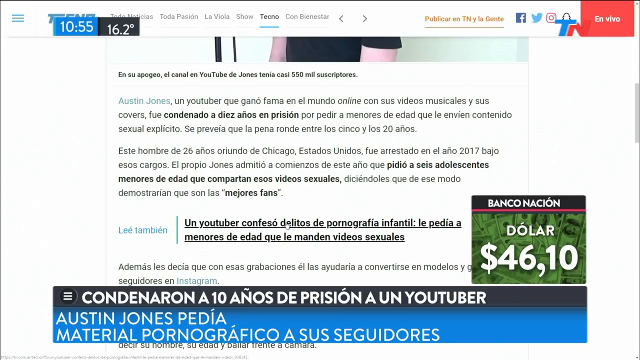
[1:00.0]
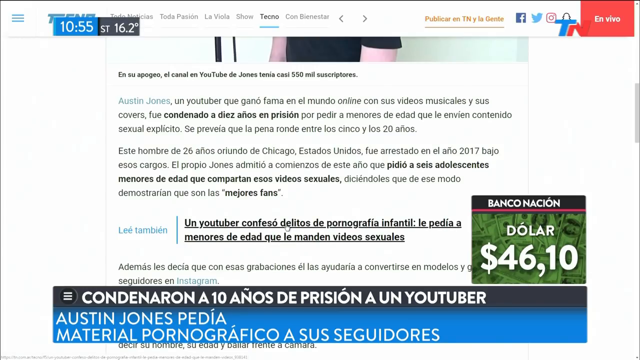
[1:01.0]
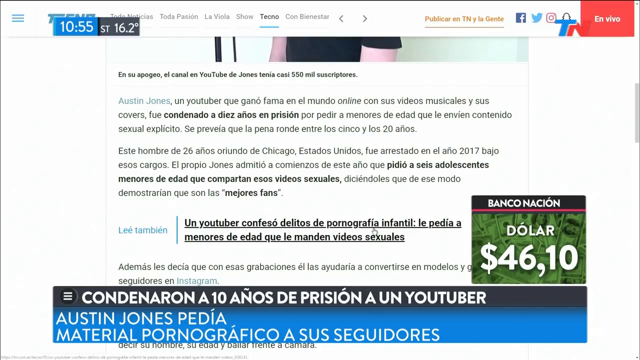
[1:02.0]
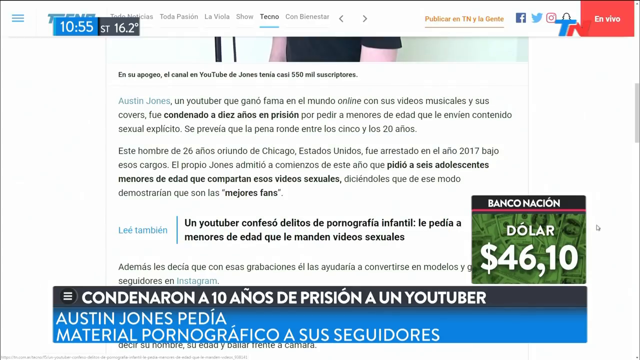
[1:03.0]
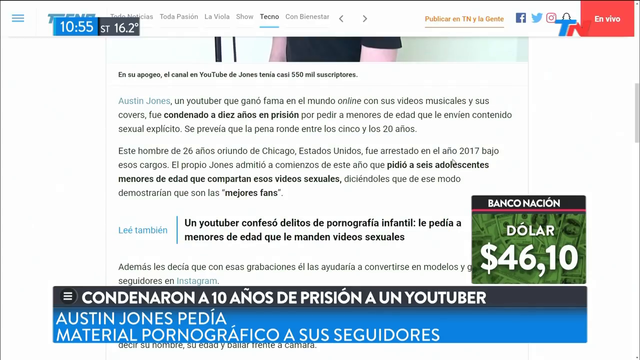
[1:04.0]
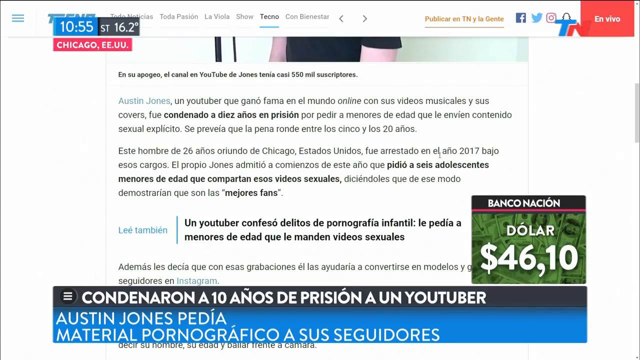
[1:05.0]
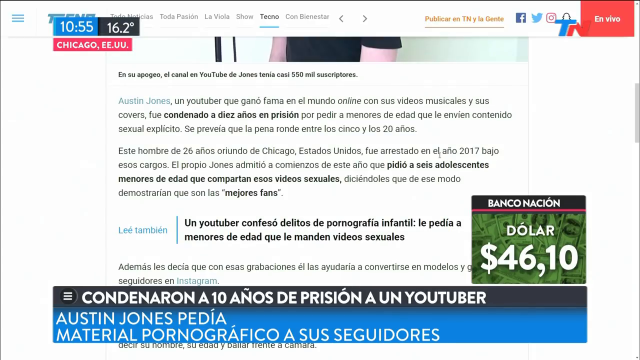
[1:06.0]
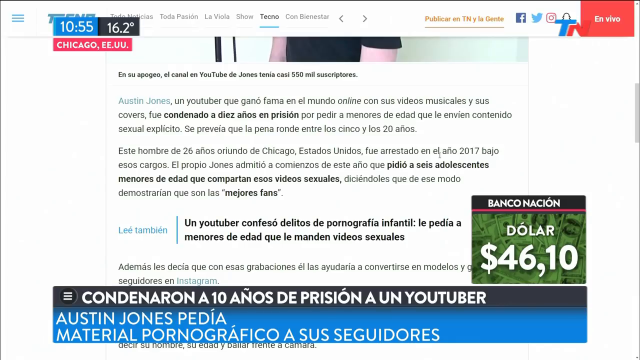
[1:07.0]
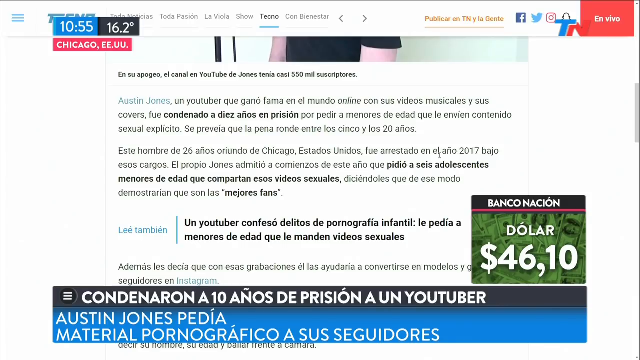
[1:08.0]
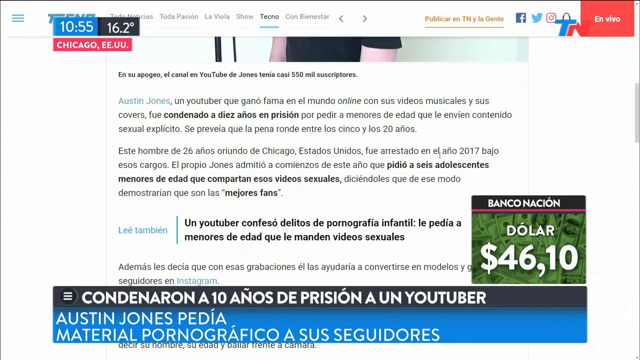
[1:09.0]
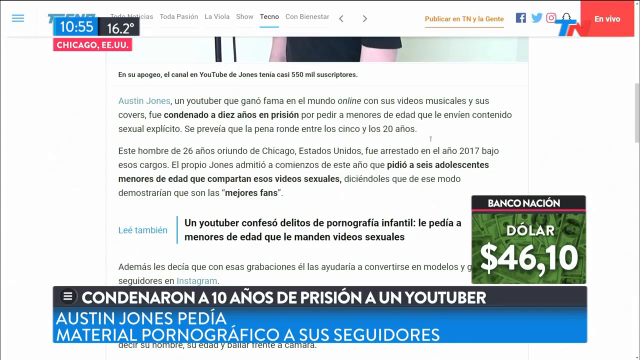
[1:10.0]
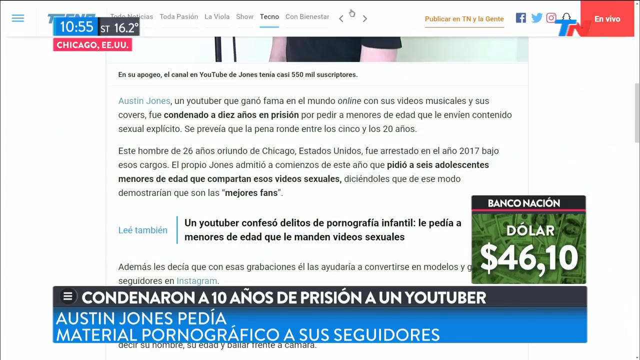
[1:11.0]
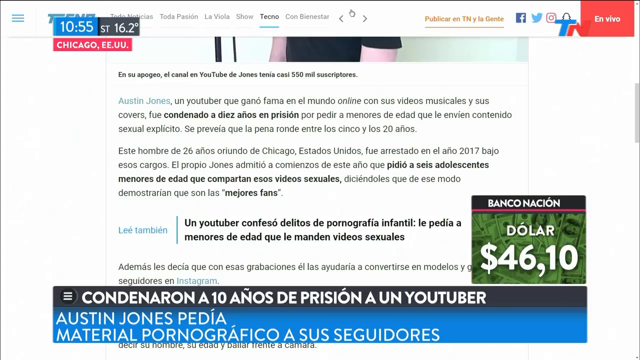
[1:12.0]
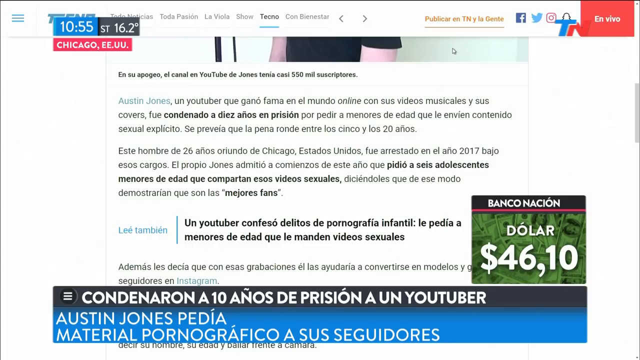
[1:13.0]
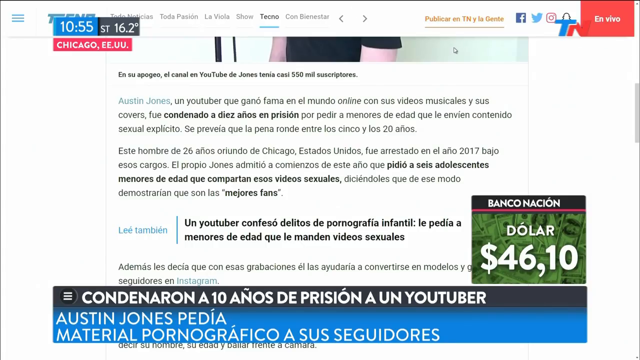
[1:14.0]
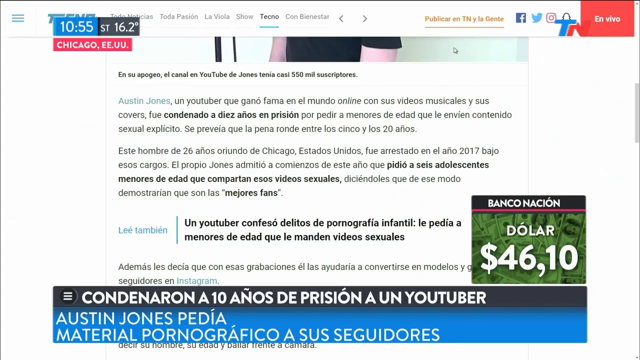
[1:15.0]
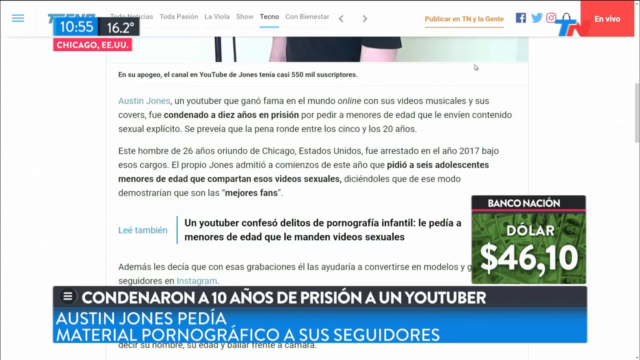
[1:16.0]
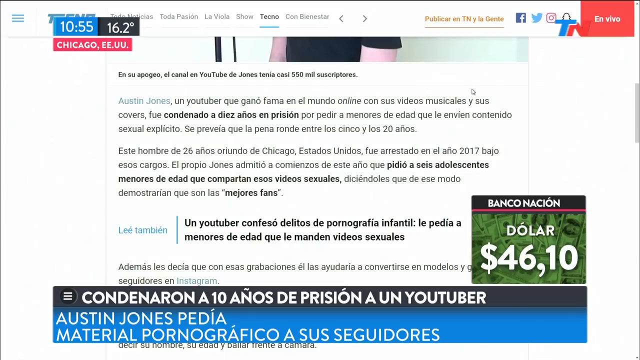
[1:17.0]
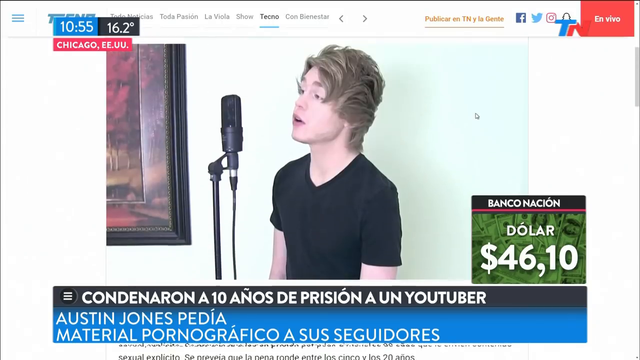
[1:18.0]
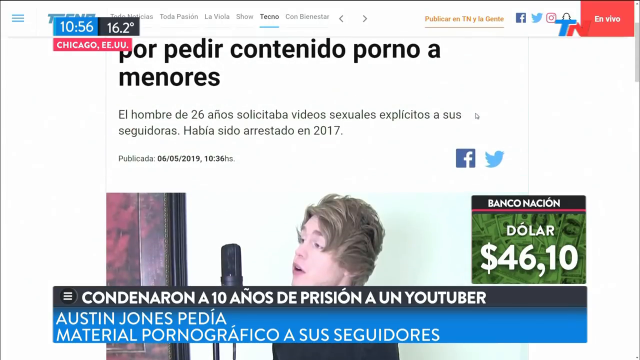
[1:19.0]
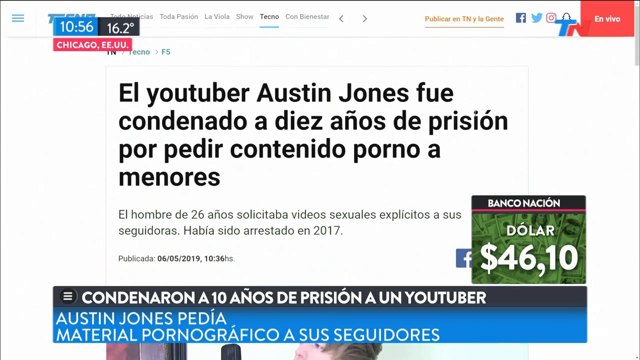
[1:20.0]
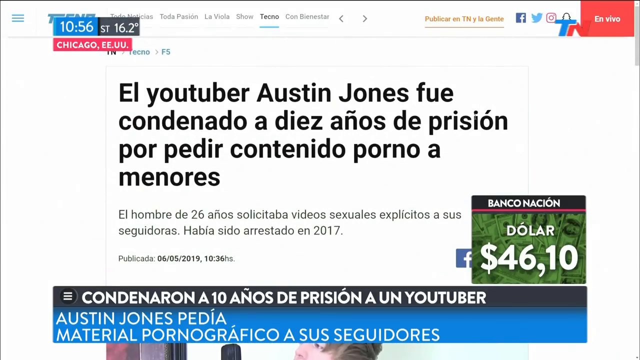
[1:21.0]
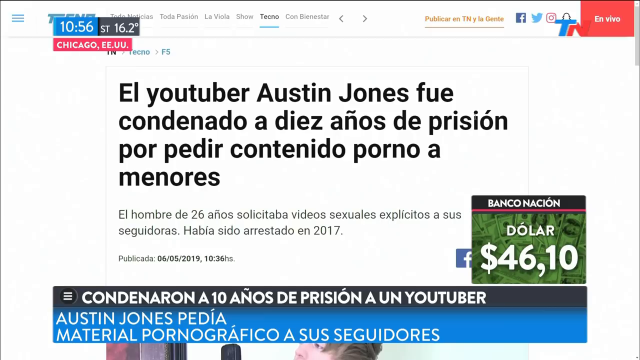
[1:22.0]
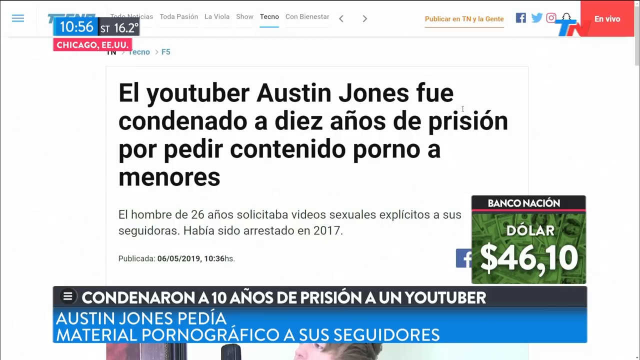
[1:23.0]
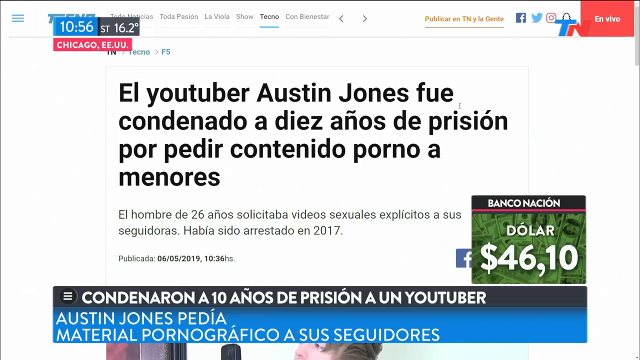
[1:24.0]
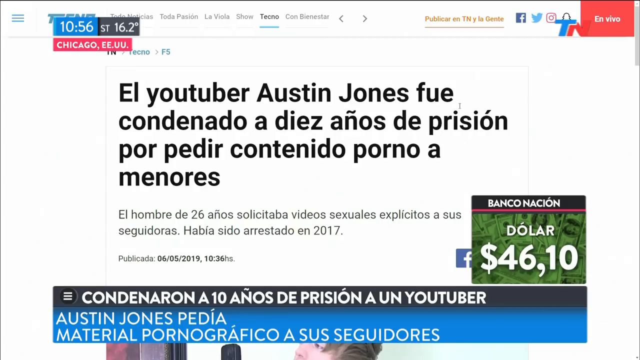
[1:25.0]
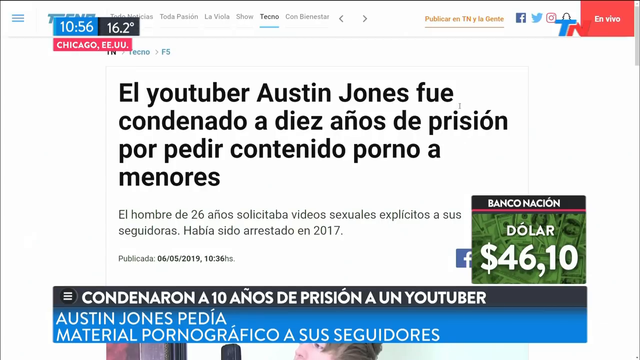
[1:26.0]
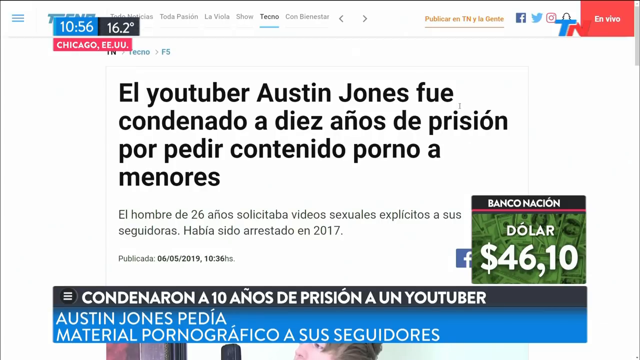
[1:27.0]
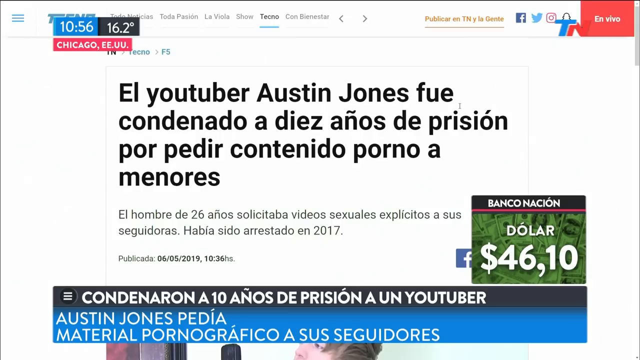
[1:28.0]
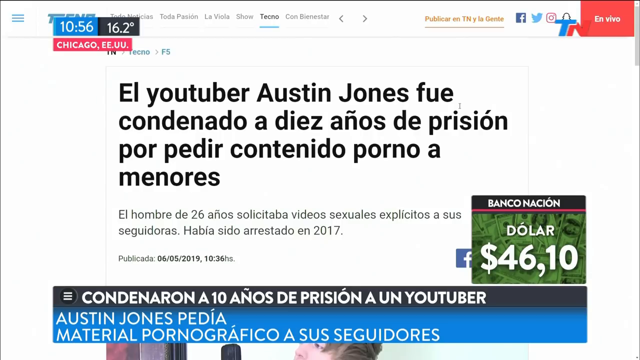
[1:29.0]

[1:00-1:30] A web page with information on it is shown. In the upper left corner the time reads 10:55, with the temperature to its right. There is a TN logo with a blue T and a red N; right next to it is a Snapchat logo, and to the left of that in turn are Instagram, Twitter and Facebook buttons. In the lower right corner is the Banco Nacional dollar, $46.10. A banner along the lower part of the screen is black on top and blue on the bottom, with Spanish text that includes the words "prison" and "YouTuber" and the name Austin Jones. In the upper part of the screen, text begins "El YouTuber Austin Jones fue condenado a."